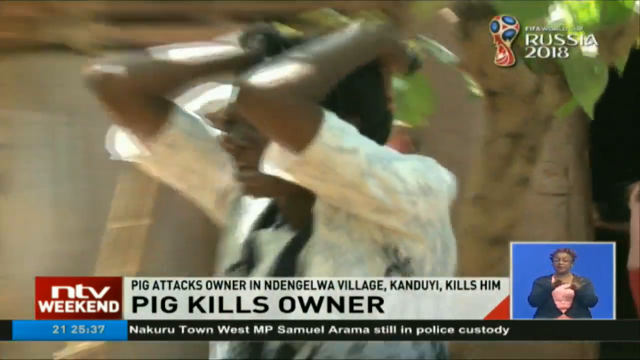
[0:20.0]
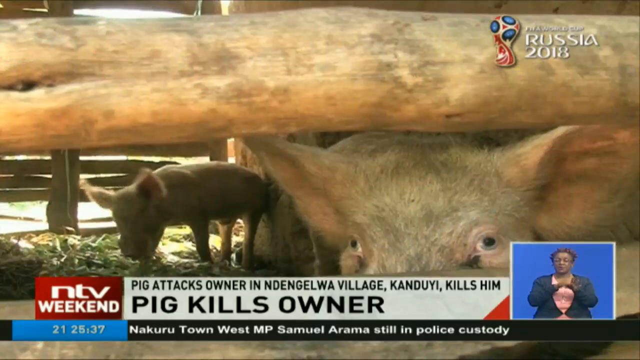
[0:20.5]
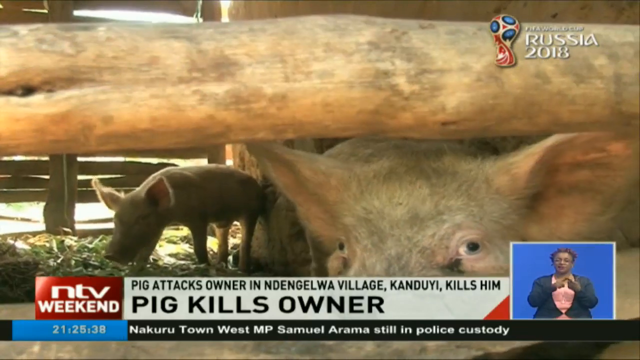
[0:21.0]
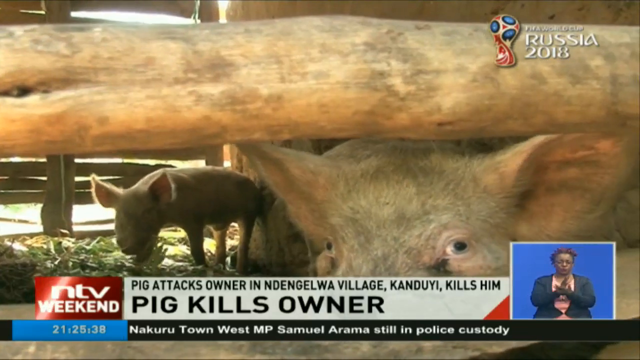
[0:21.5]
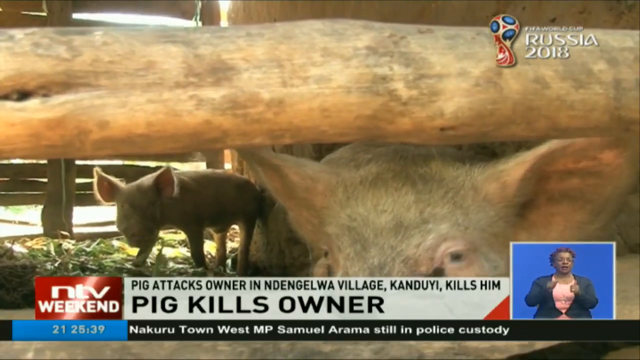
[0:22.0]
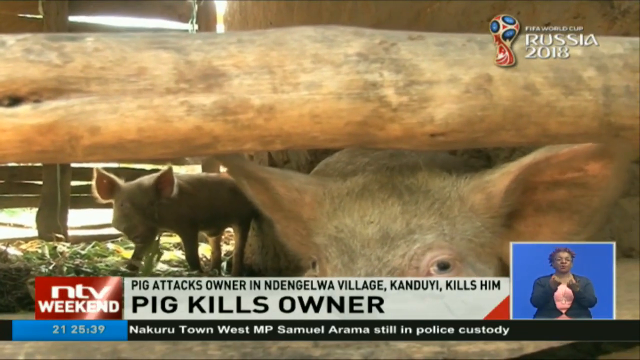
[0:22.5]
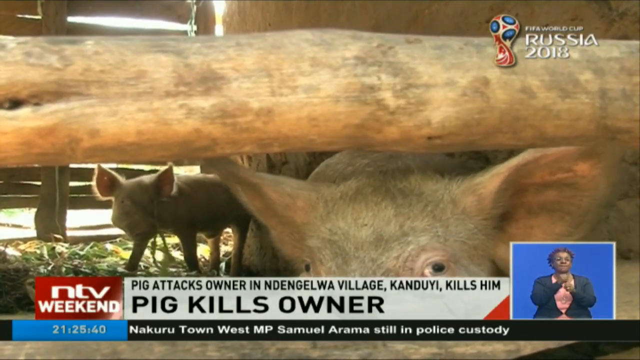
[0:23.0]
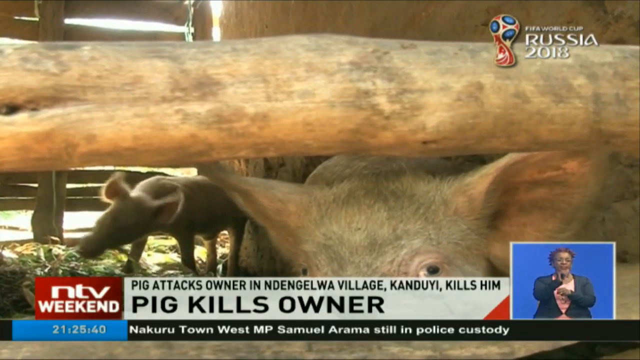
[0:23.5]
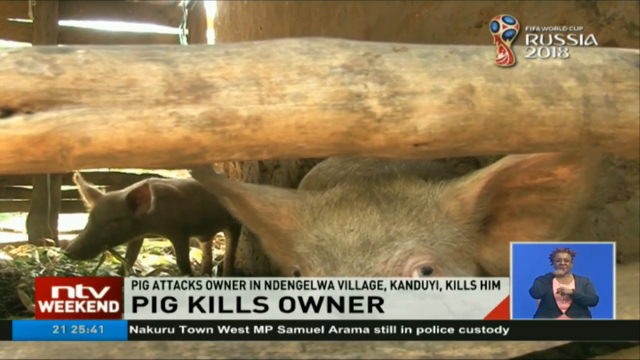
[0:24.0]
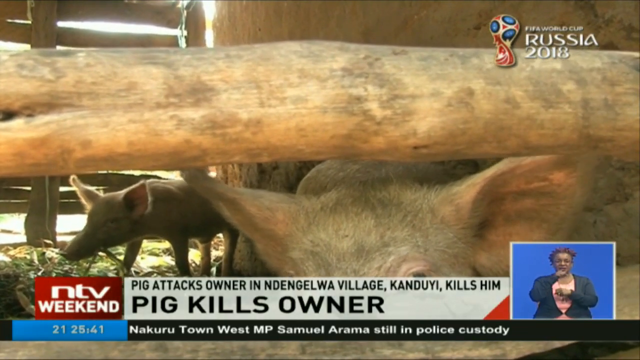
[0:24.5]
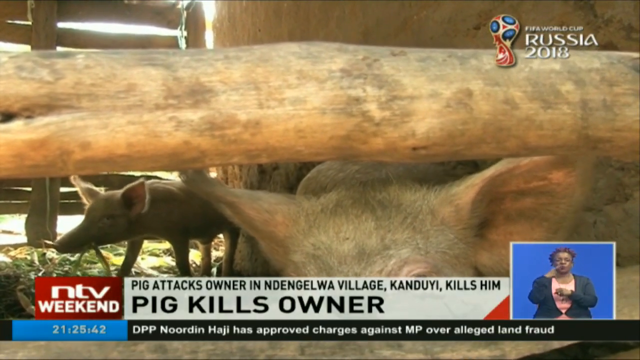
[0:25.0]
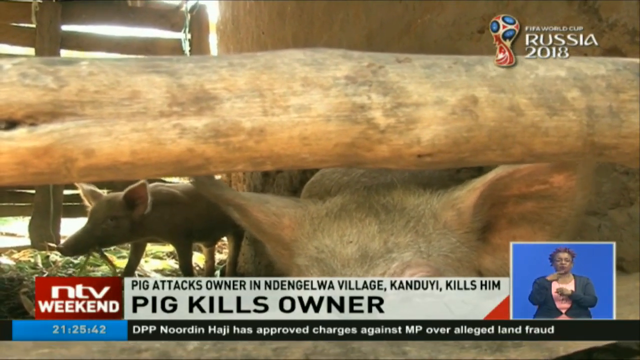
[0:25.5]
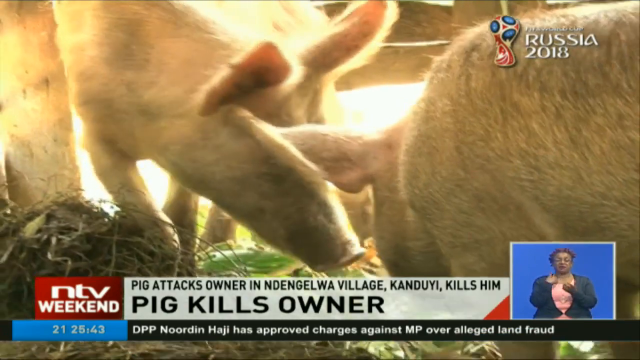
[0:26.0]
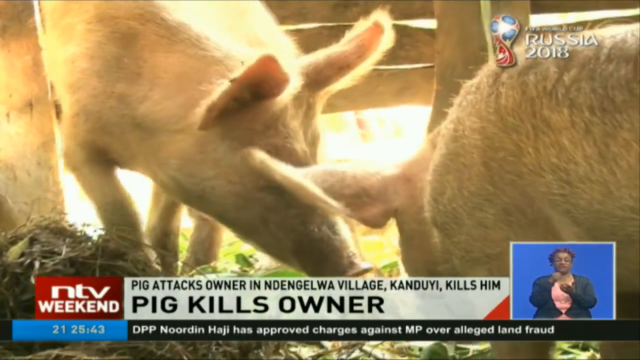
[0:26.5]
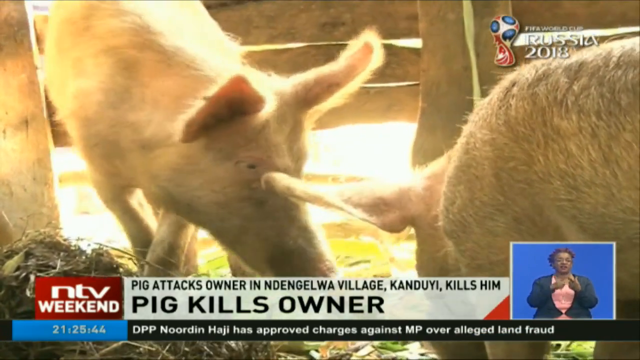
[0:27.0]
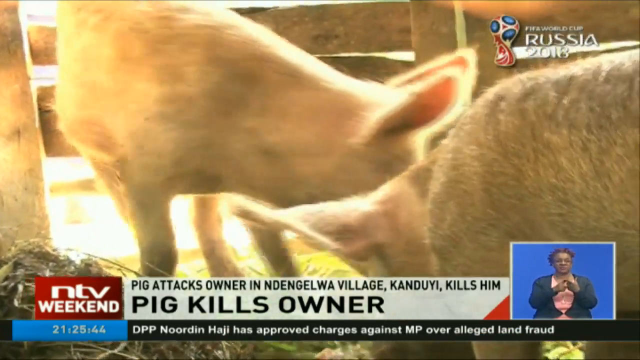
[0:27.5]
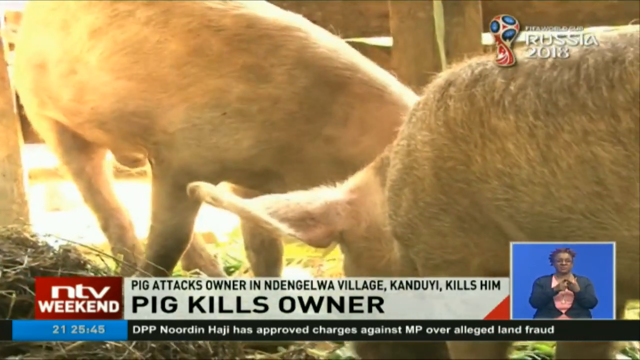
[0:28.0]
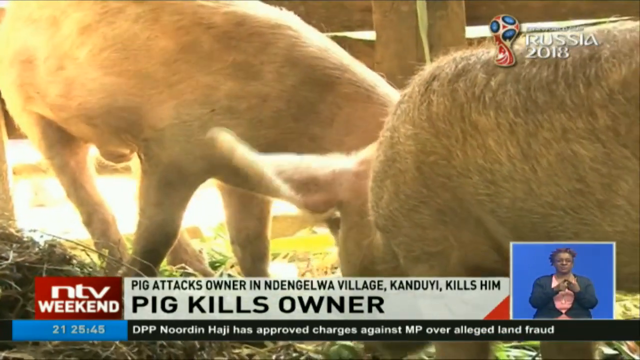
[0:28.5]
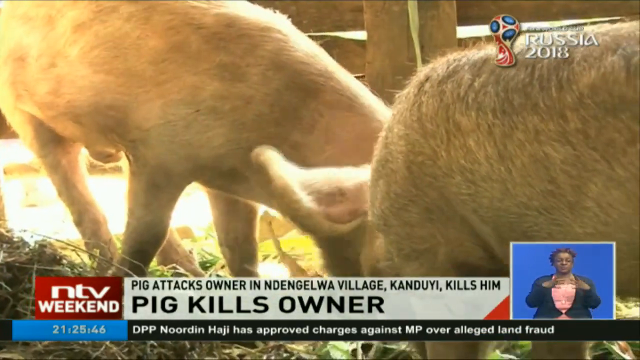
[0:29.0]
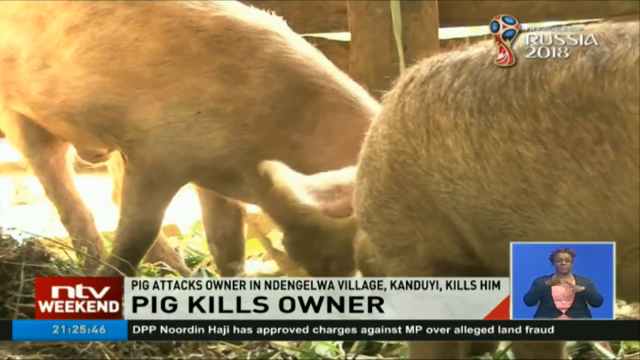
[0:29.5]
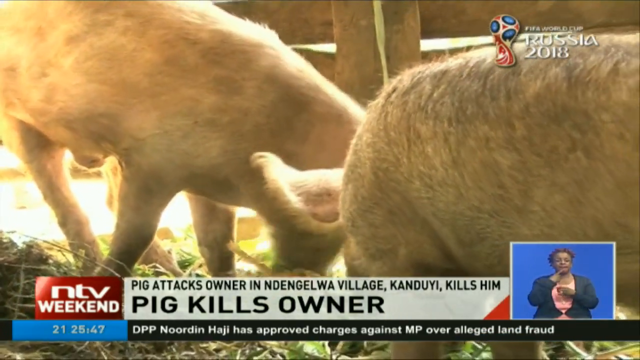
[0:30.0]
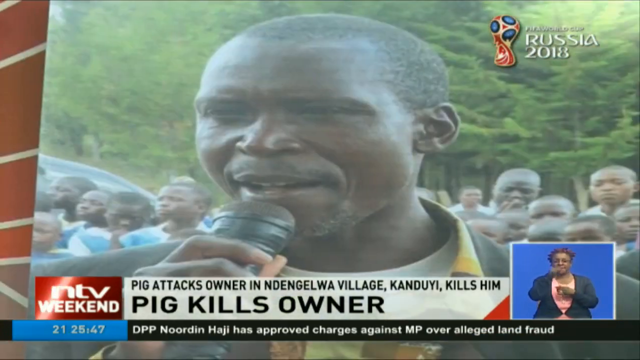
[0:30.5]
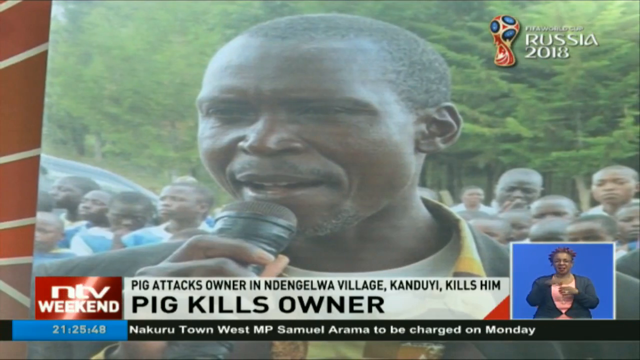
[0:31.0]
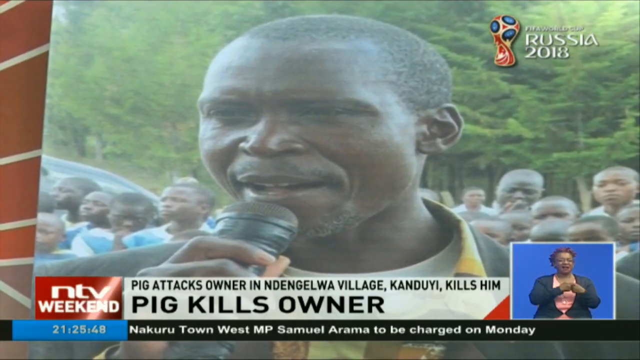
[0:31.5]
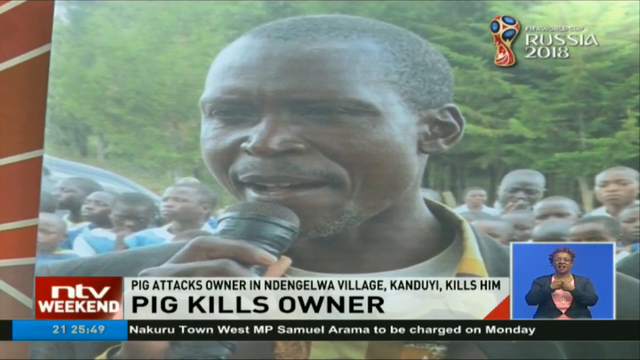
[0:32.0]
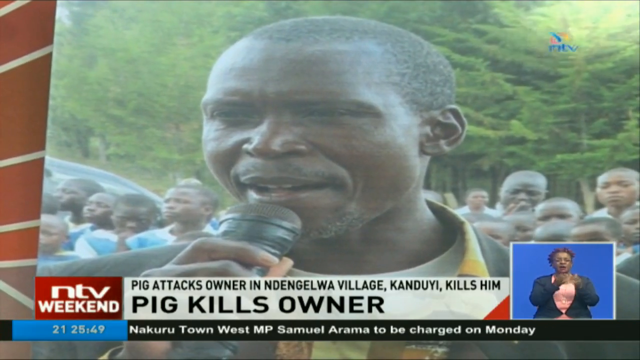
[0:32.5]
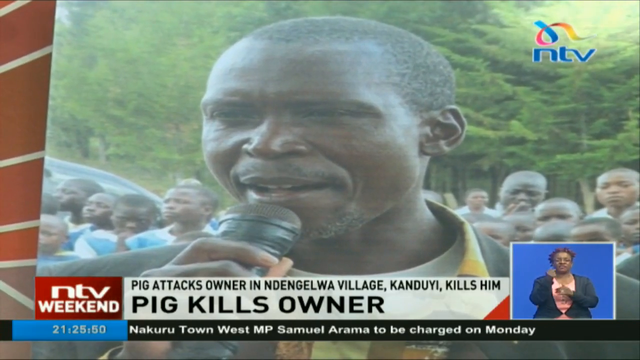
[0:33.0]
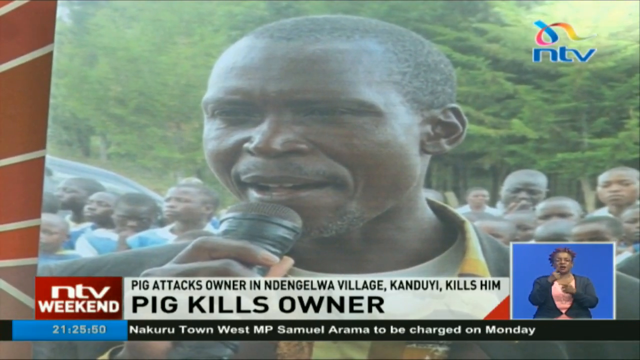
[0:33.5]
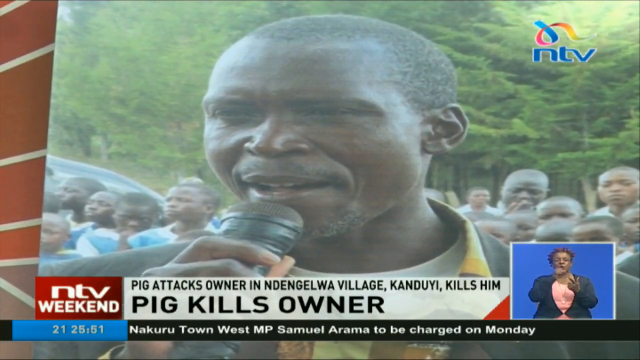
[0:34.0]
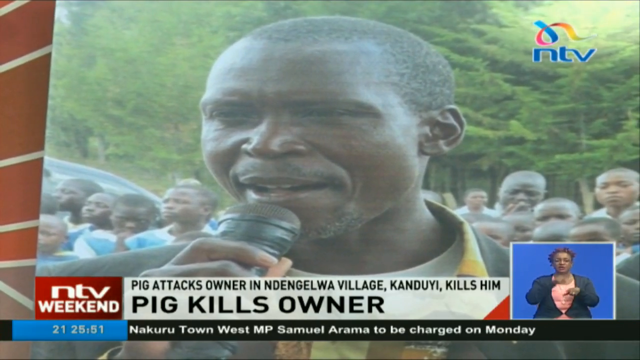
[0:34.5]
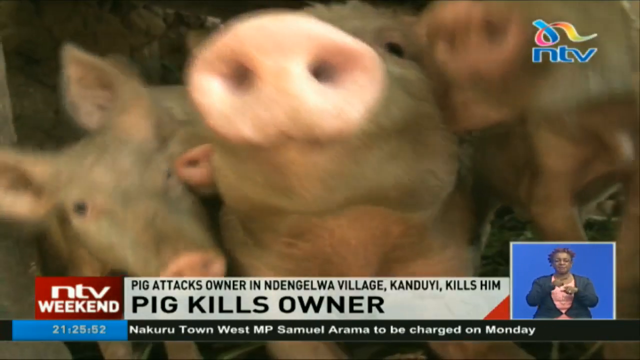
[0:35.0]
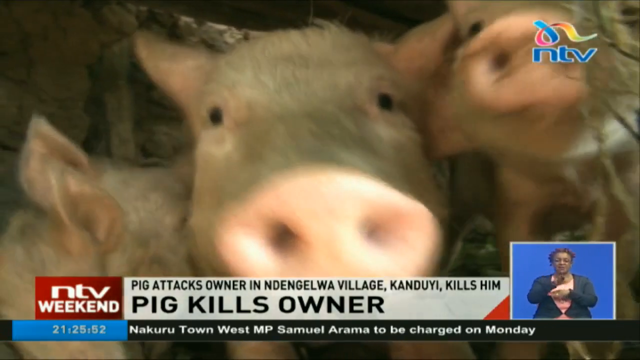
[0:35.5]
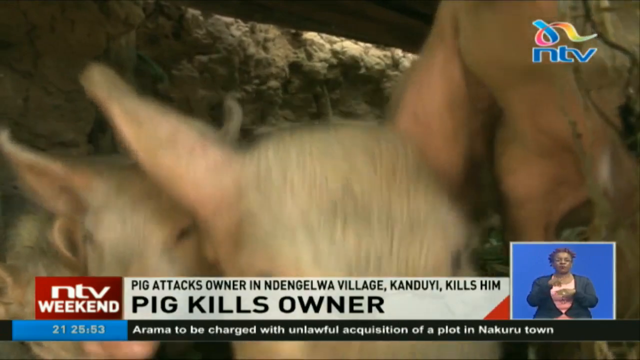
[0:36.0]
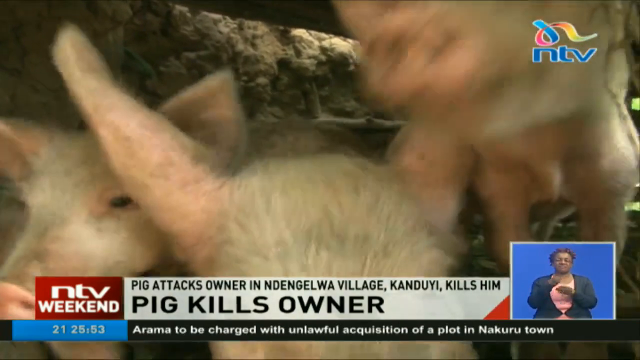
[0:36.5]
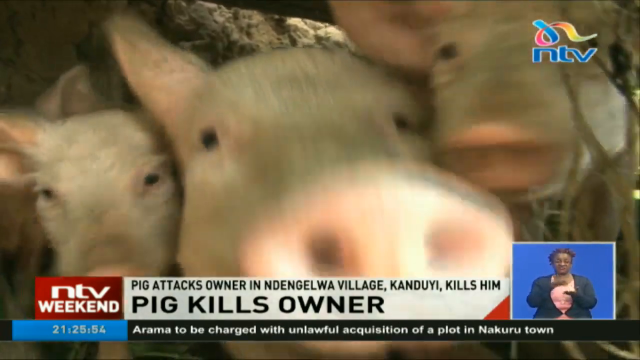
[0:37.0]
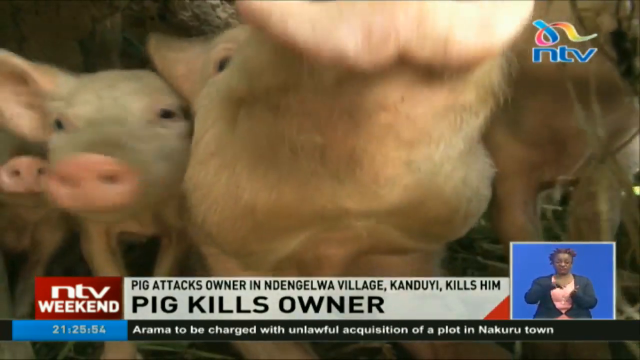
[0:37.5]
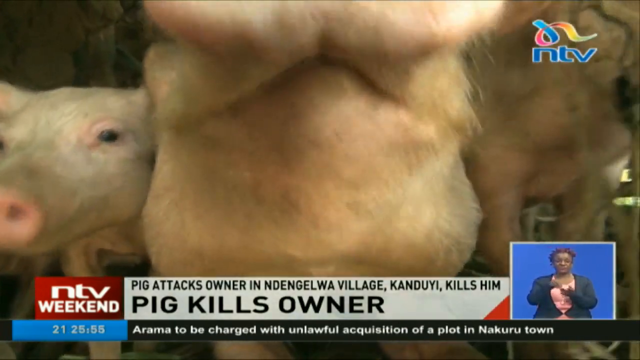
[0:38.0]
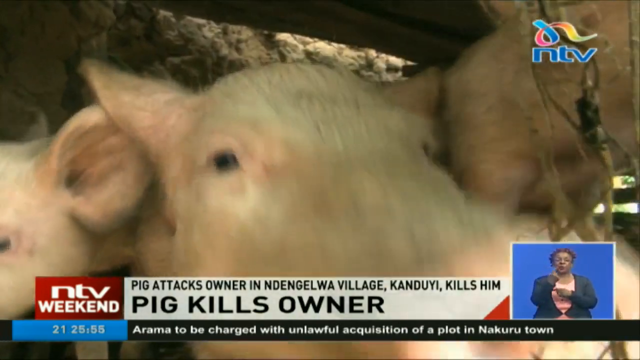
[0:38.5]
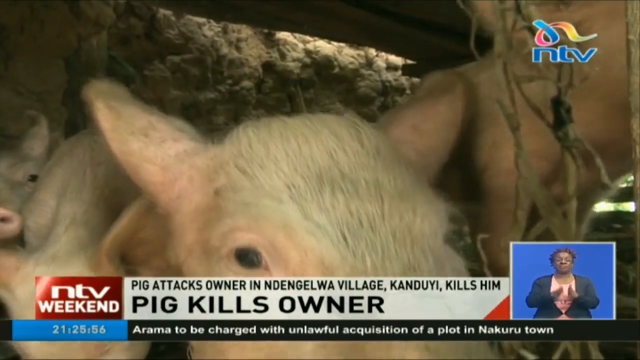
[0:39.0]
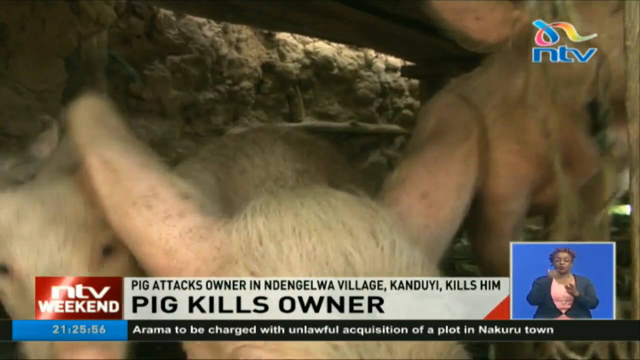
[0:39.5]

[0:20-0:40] People are shown, some of whom seem to be crying while others are not. The headline continues, reading "Pig attacks owner in Ndengelwa village Kanduyi kills him". Footage shows pigs, seemingly small ones, in their pigsties, focused on eating. Next comes what seems to be an old picture of a man holding a mic and apparently giving a speech, with what seem to be a lot of kids in the background; he seems possibly to be the owner who was killed by the pigs, and apparently was a teacher. At the end, four pigs appear, and they seem not to be calm at all.